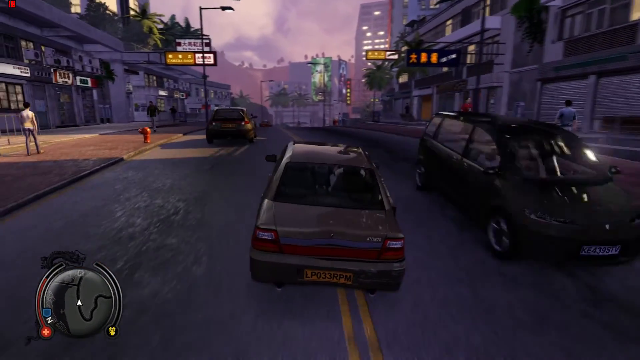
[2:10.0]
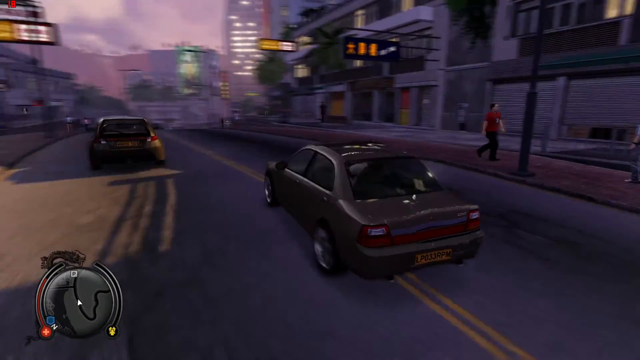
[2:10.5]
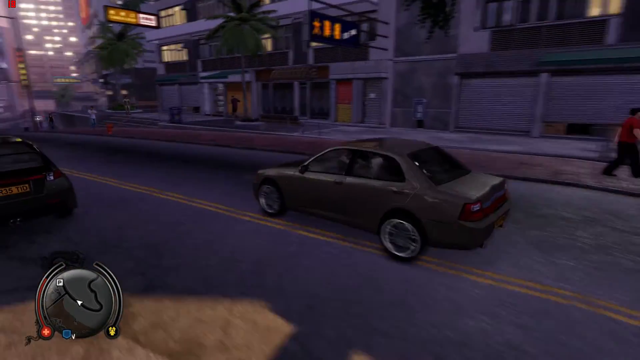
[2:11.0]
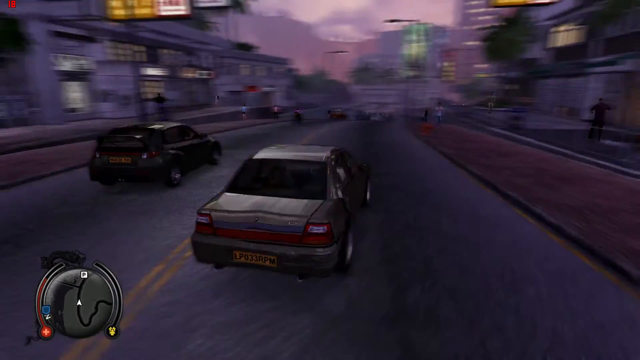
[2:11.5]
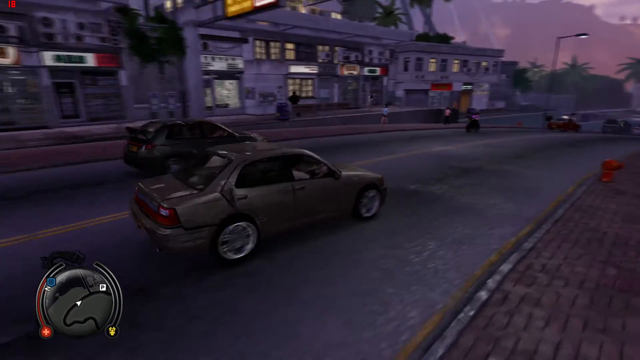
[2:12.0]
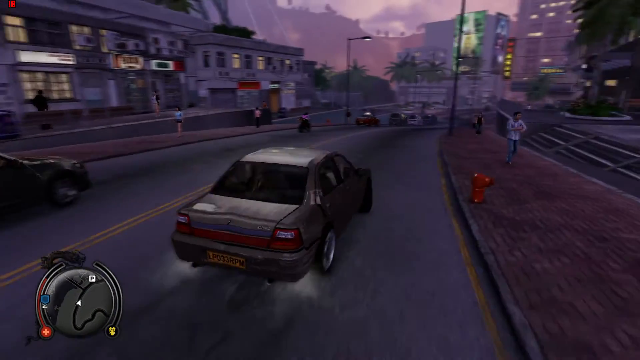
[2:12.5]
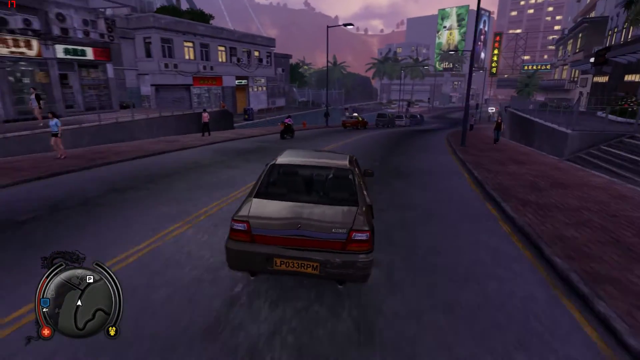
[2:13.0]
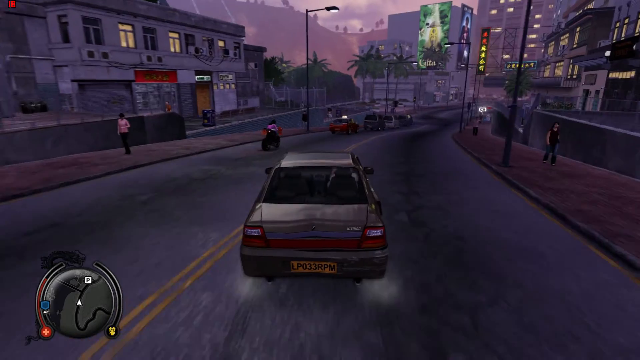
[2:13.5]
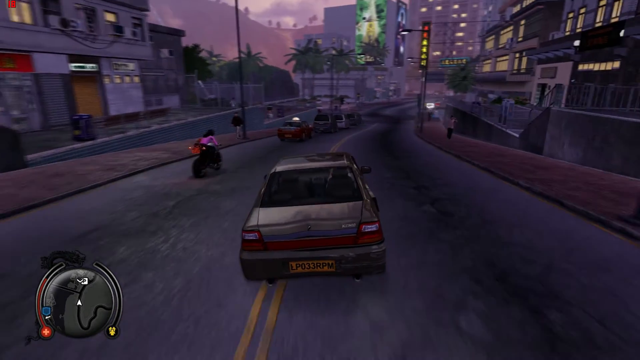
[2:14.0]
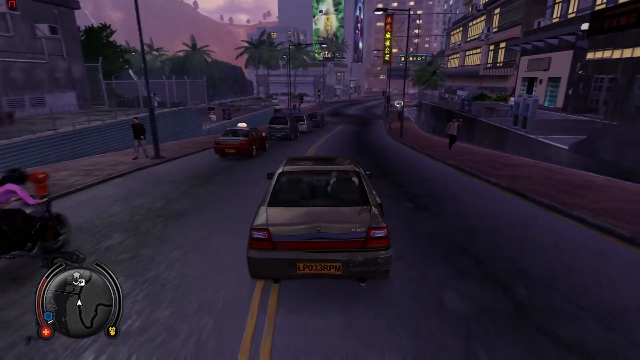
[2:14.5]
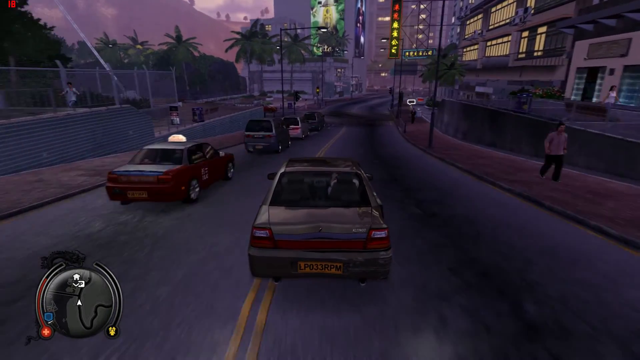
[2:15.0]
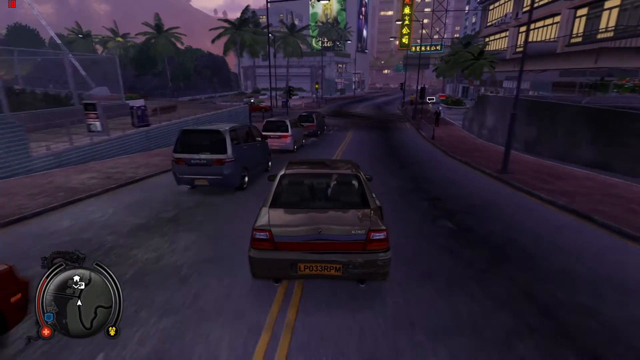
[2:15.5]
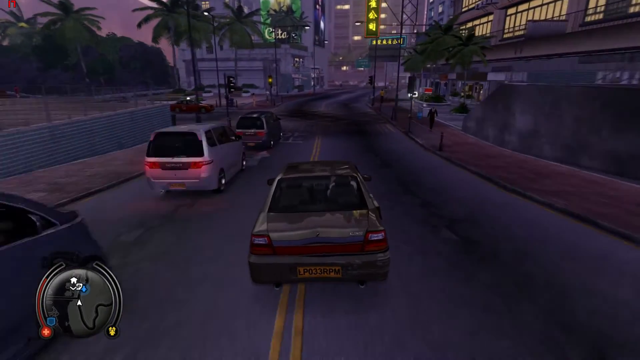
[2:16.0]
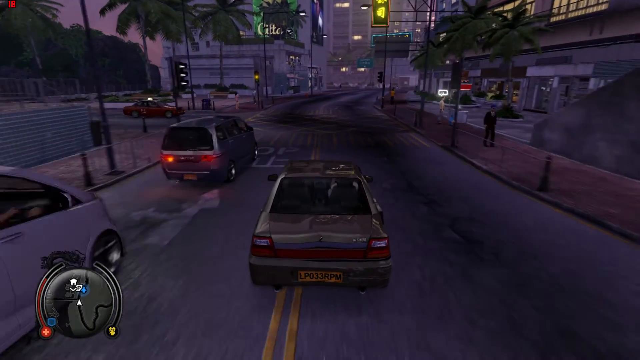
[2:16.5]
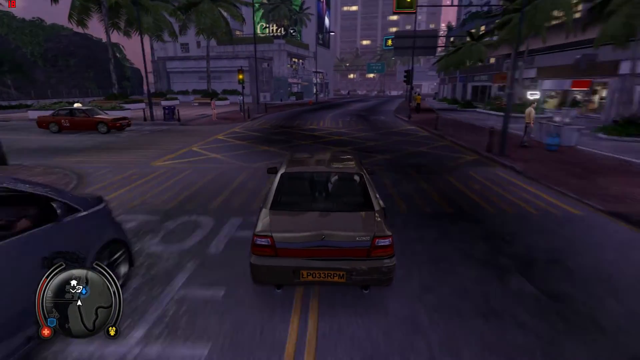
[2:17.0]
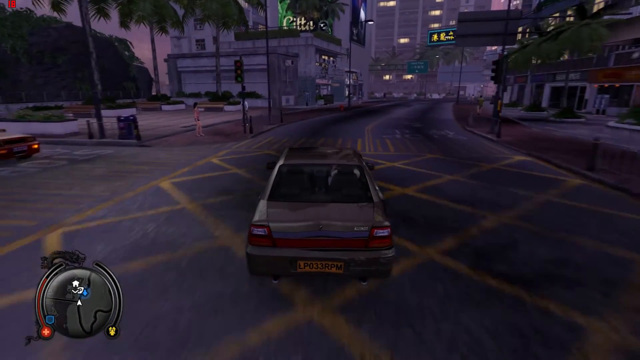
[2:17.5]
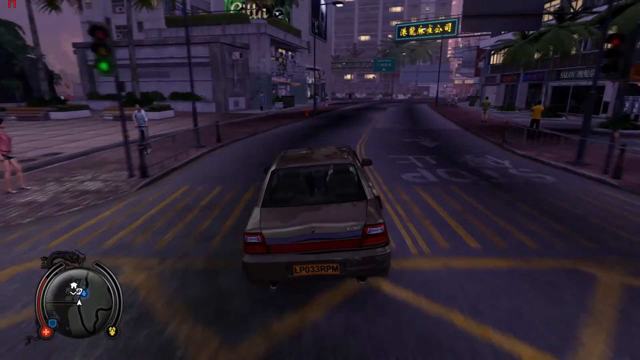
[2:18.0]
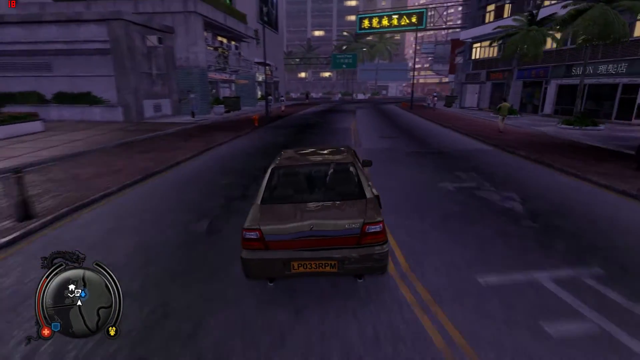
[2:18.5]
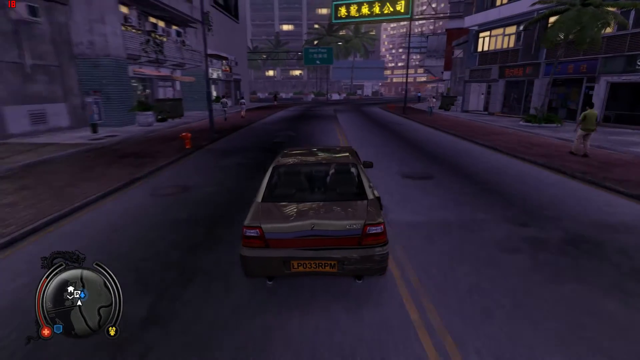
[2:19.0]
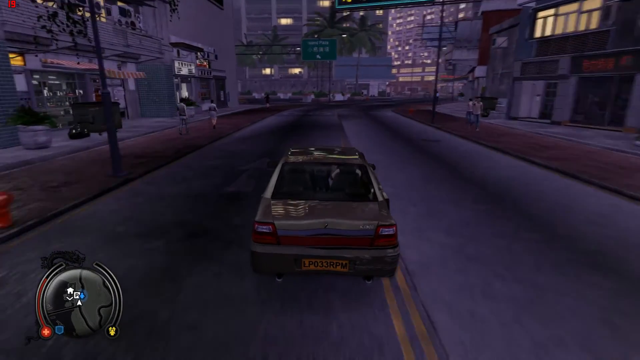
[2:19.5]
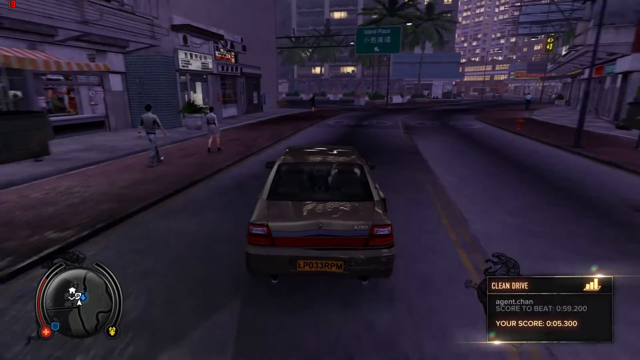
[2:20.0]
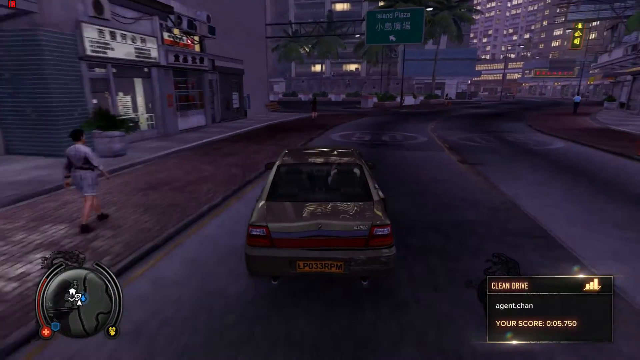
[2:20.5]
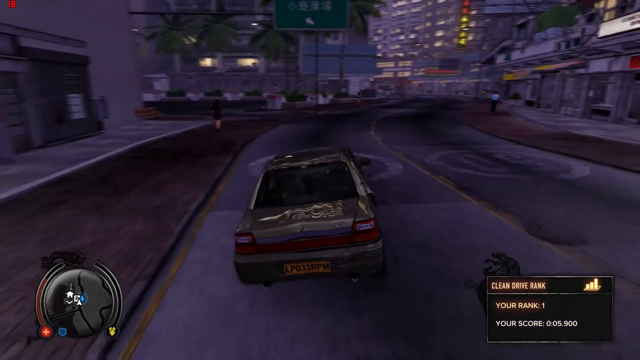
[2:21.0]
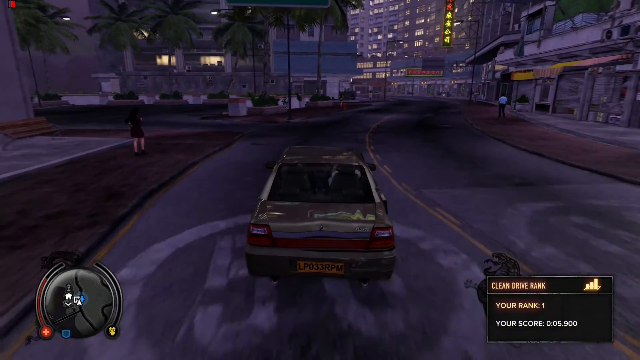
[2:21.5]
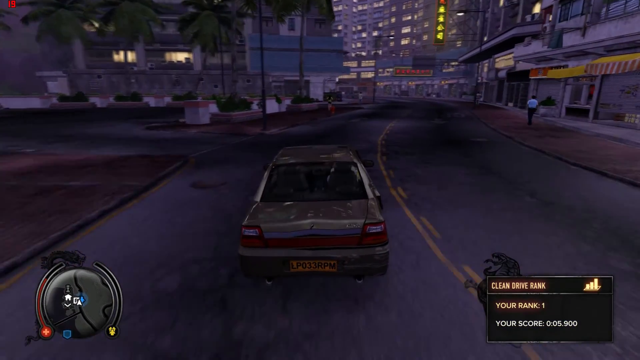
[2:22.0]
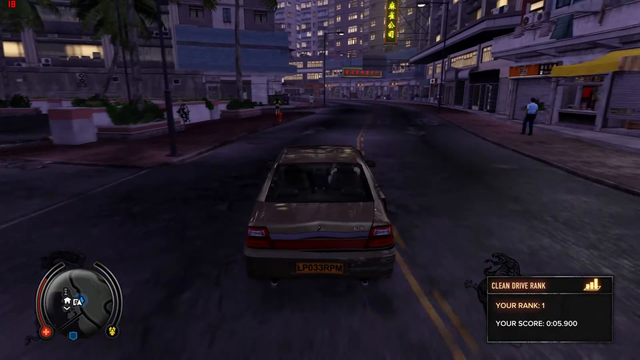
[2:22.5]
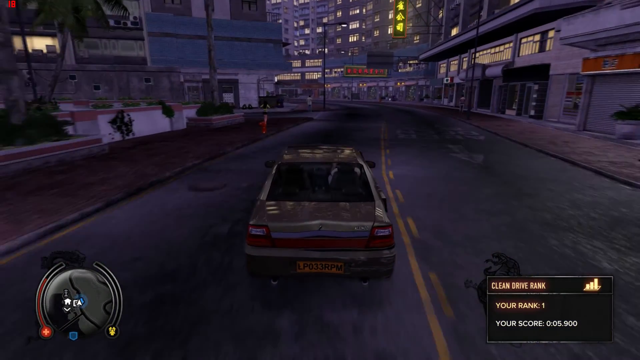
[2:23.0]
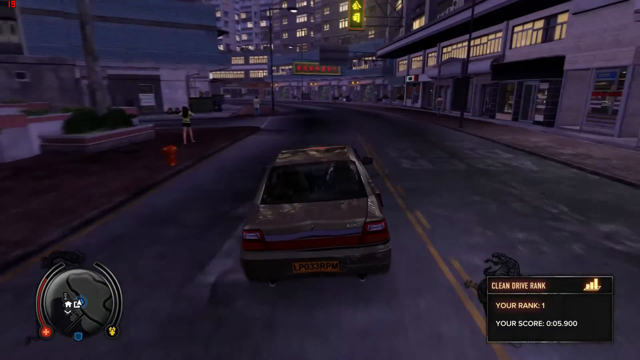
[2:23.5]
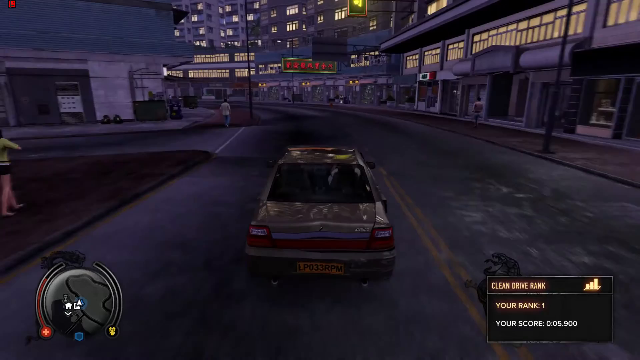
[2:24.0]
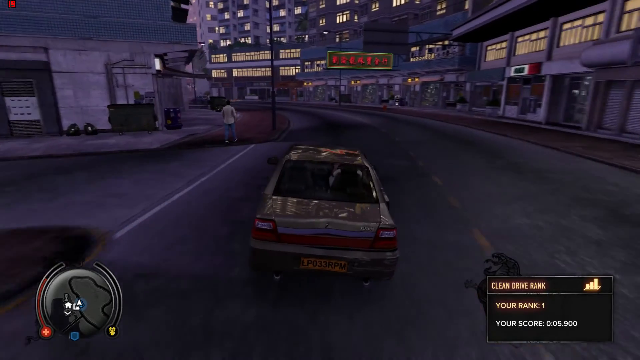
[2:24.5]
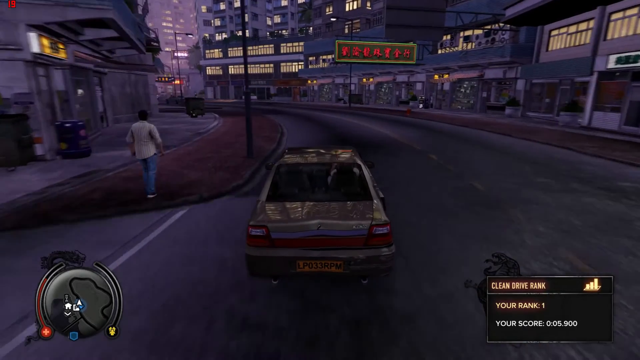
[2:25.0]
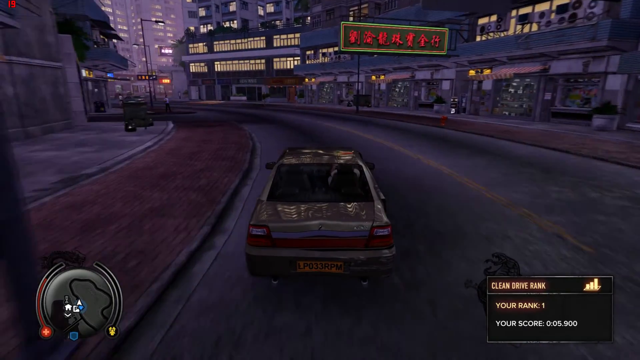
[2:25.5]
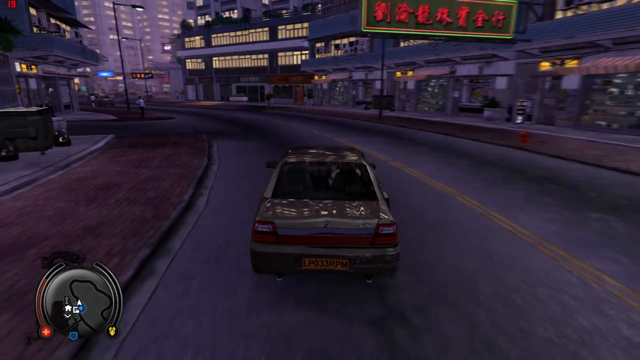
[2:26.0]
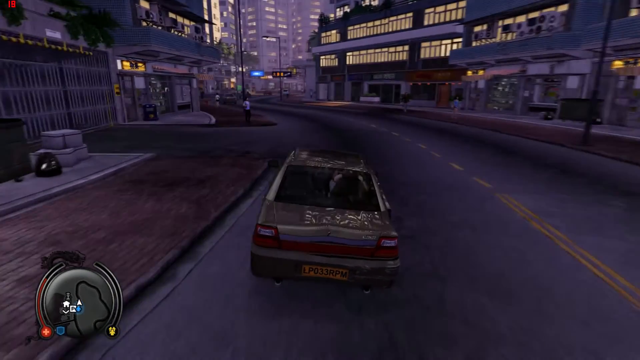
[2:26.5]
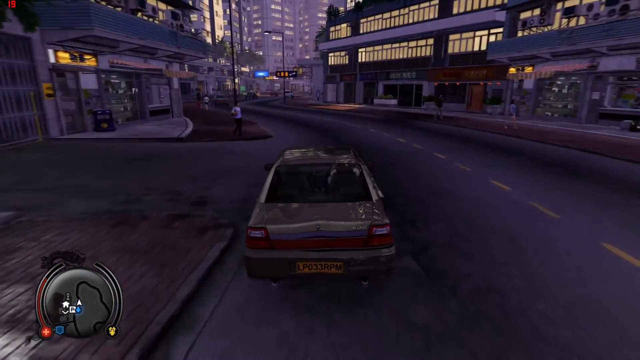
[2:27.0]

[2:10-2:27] Having crossed the double yellow line, the vehicle continues driving against the line of traffic. The point of view shifts toward the left side of the vehicle, exposing the driver's door and front fender, before moving back behind the vehicle in a third-person view. Now driving on the double yellow line, the vehicle passes a motorcycle, a taxi and three minivans, then crosses an intersection on a green light, with pedestrians on both sides of the street, a marked pedestrian crossing, and multiple buildings with lit neon signs in Chinese letters around the roadway. Red fire hydrants and street lights are visible. The vehicle crosses back over the double yellow lines to the correct side of the road, where the road is empty, and continues down the street, taking the bends not very smoothly but without hitting any curbs or other vehicles. Lights are visible through the windows of the surrounding buildings, and the scene is dark with a purple tint or haze.